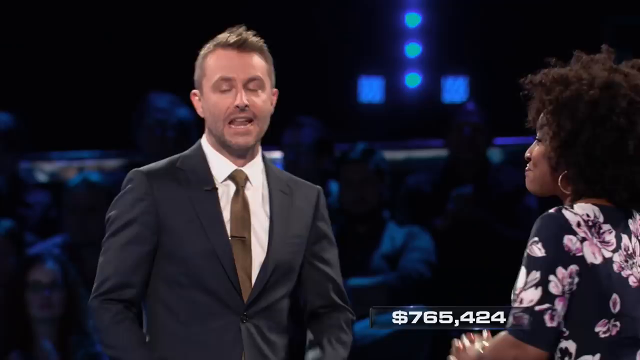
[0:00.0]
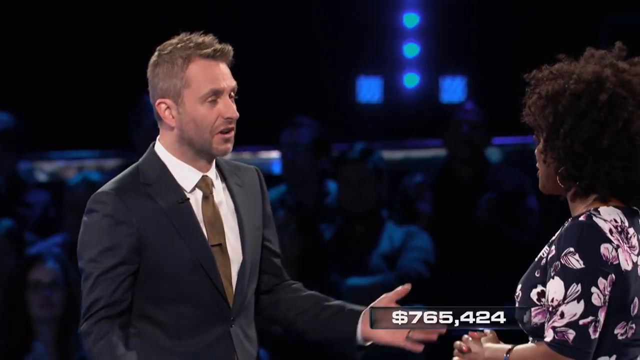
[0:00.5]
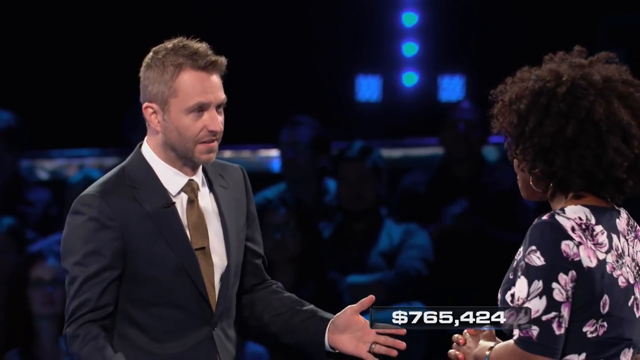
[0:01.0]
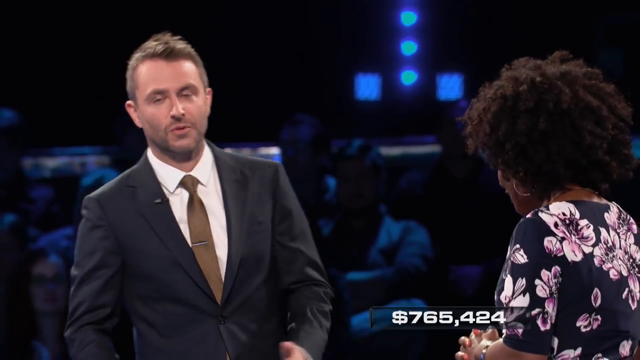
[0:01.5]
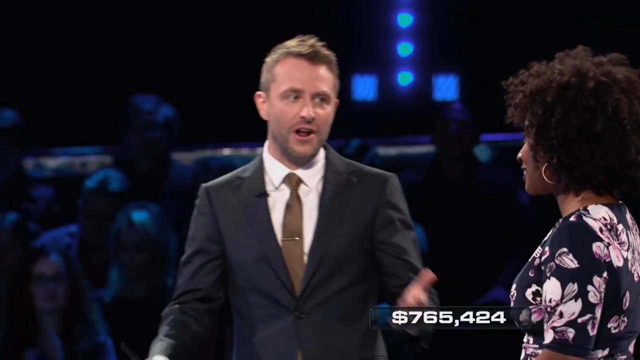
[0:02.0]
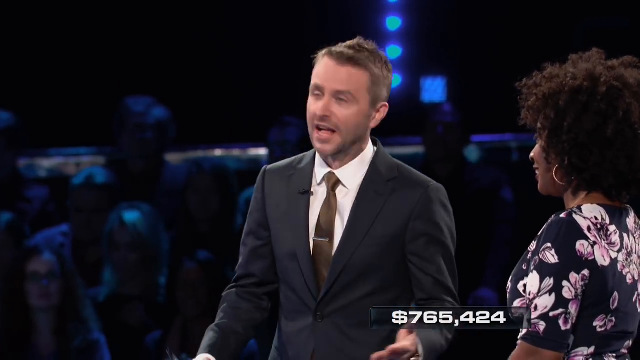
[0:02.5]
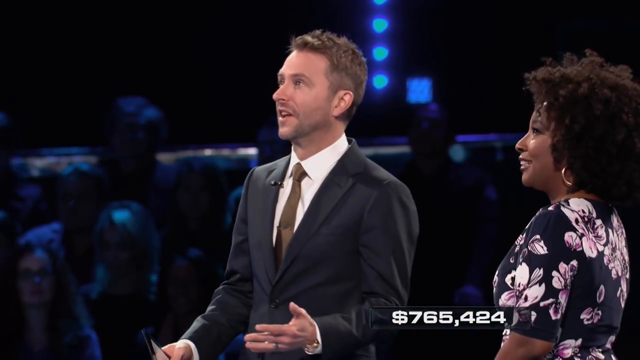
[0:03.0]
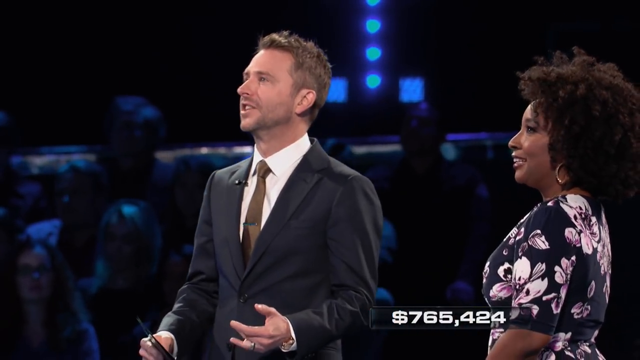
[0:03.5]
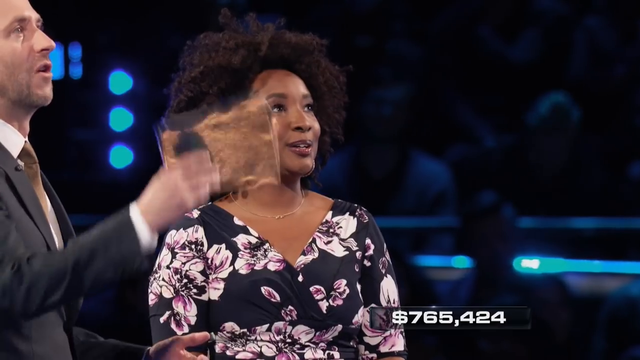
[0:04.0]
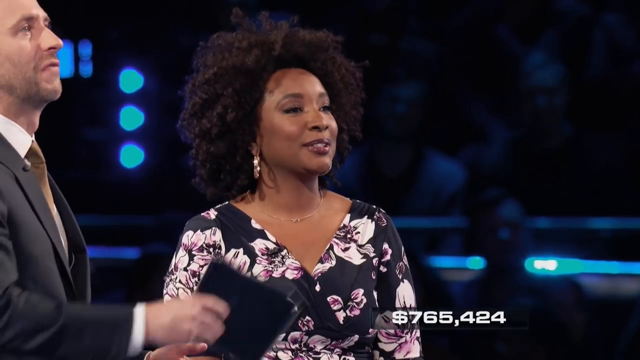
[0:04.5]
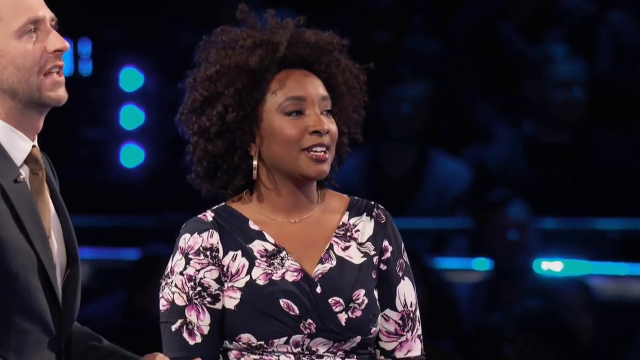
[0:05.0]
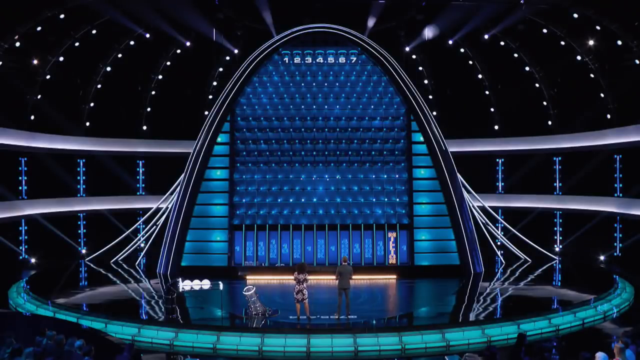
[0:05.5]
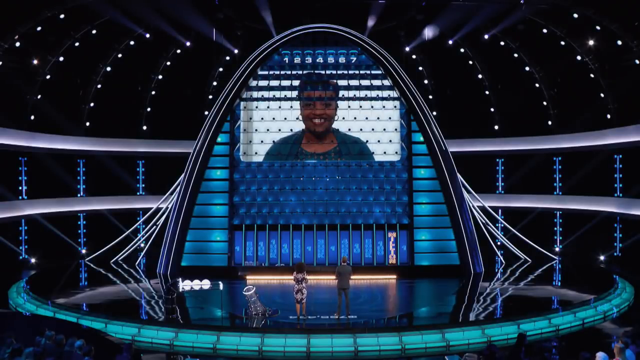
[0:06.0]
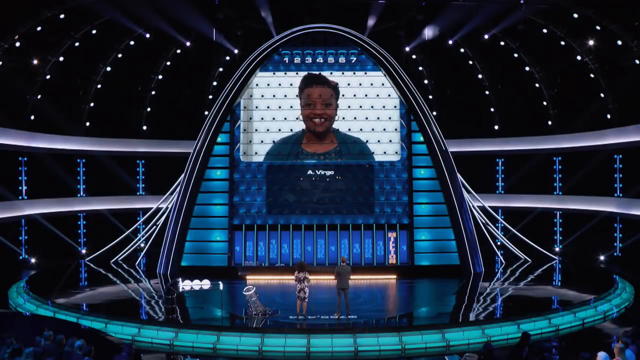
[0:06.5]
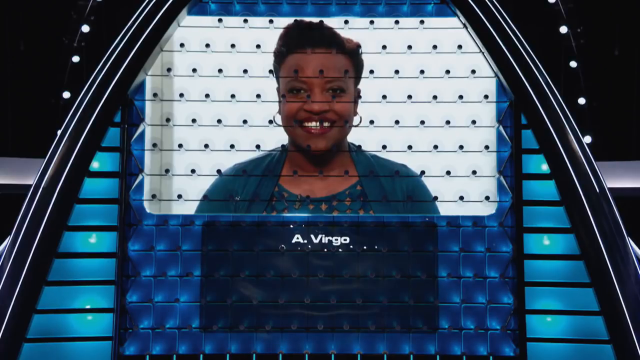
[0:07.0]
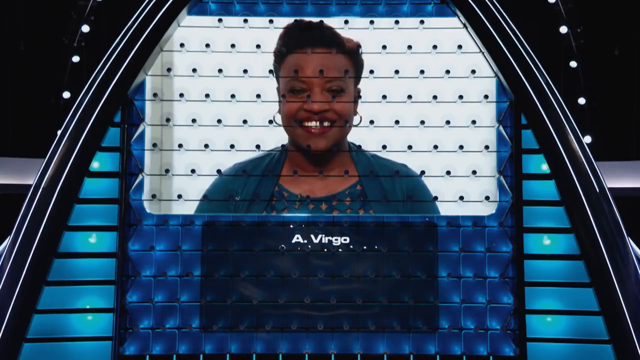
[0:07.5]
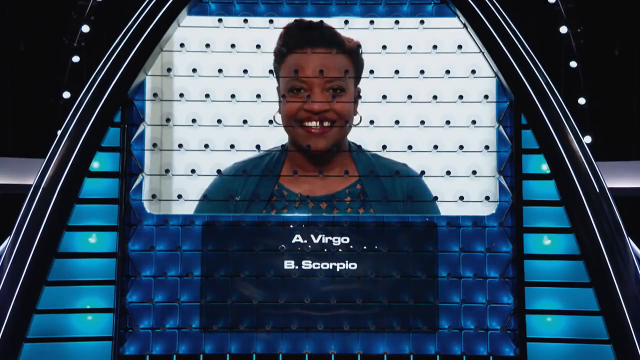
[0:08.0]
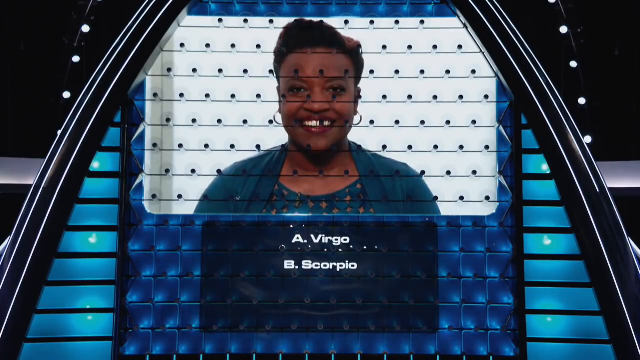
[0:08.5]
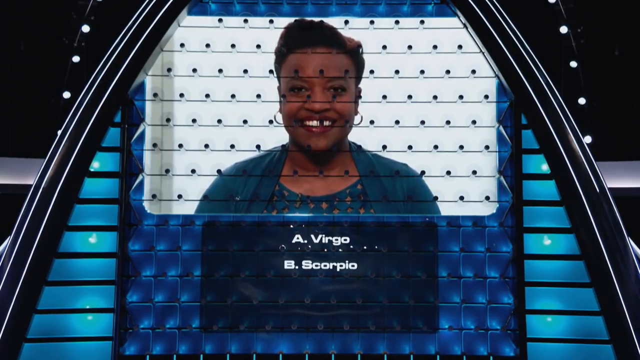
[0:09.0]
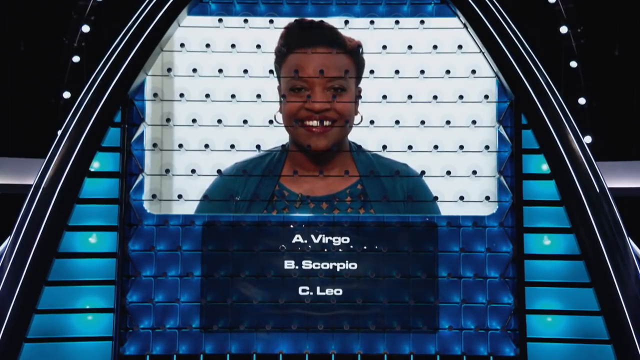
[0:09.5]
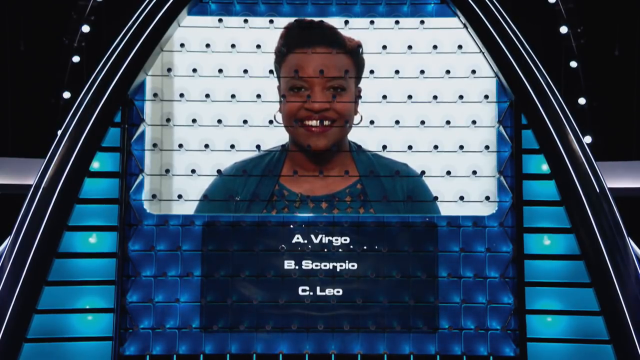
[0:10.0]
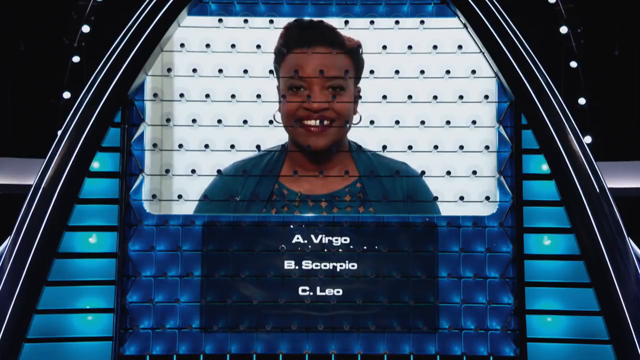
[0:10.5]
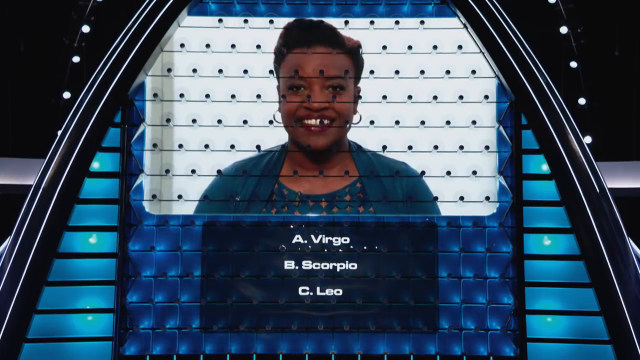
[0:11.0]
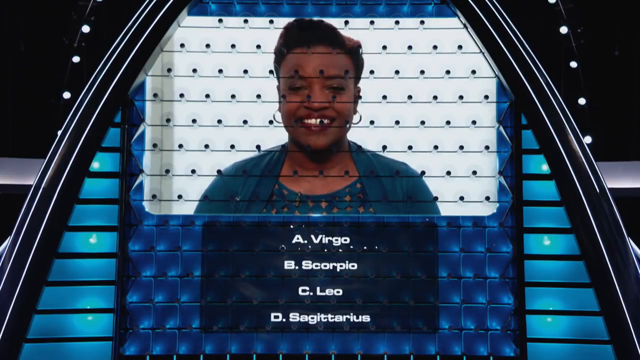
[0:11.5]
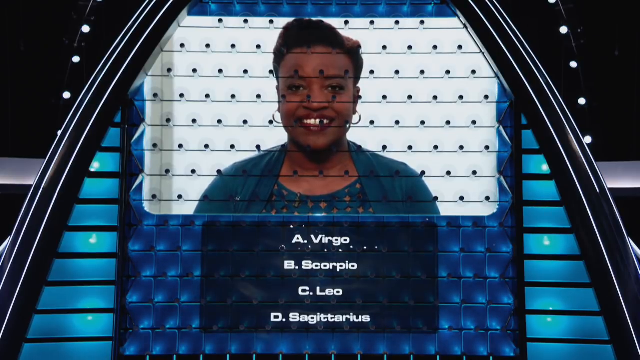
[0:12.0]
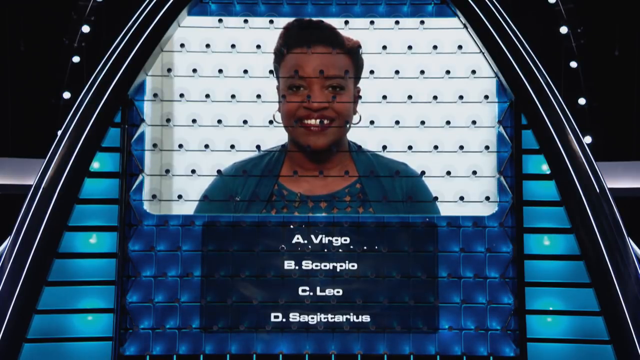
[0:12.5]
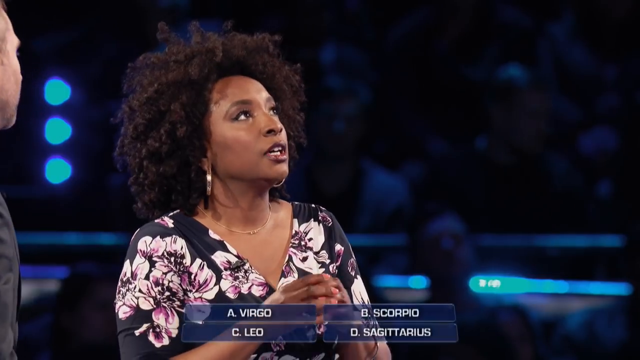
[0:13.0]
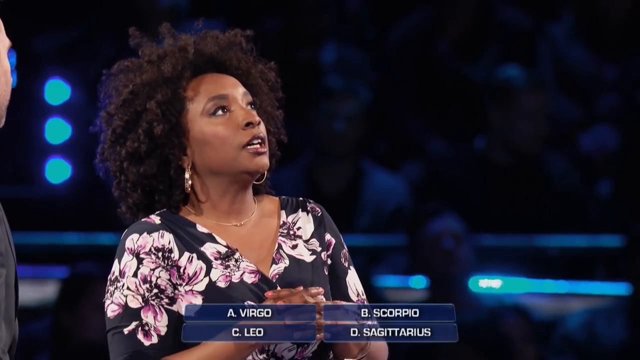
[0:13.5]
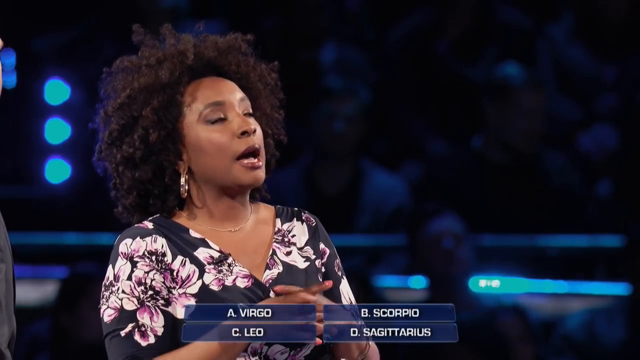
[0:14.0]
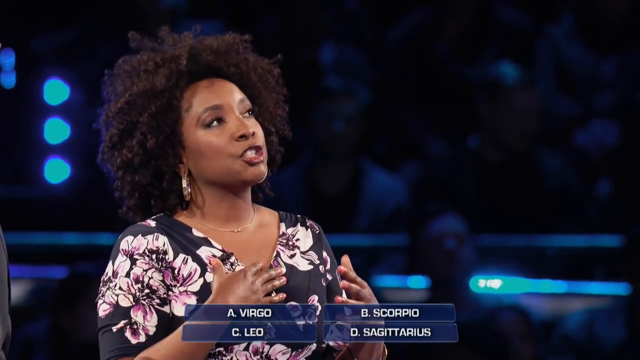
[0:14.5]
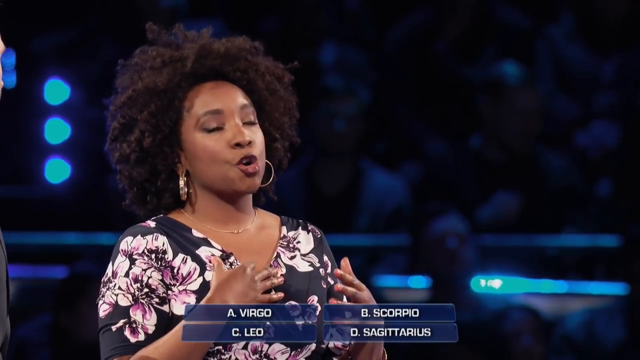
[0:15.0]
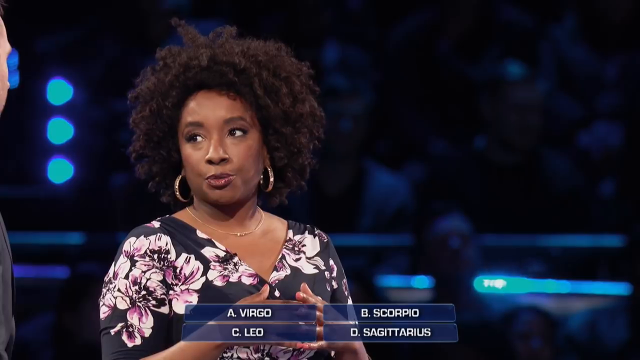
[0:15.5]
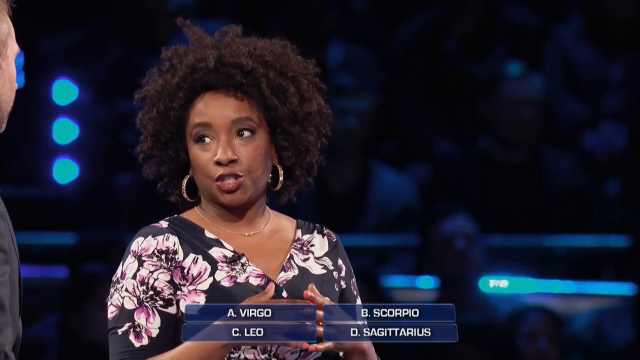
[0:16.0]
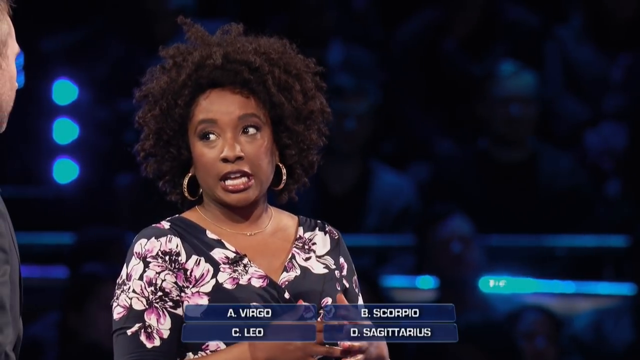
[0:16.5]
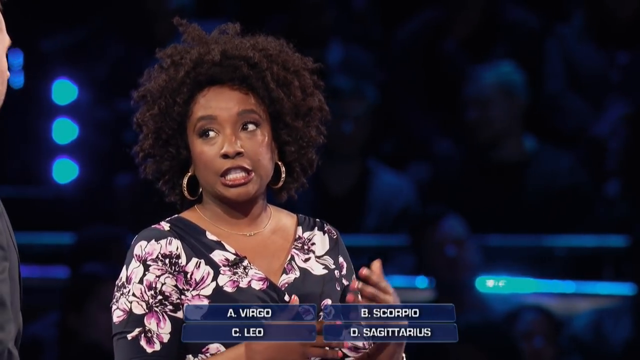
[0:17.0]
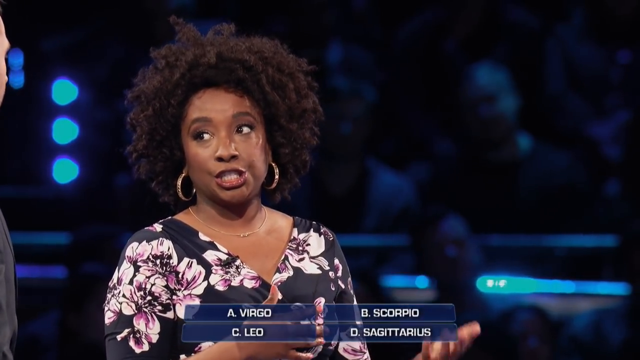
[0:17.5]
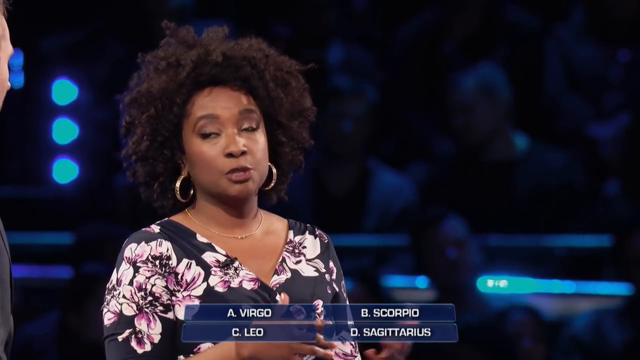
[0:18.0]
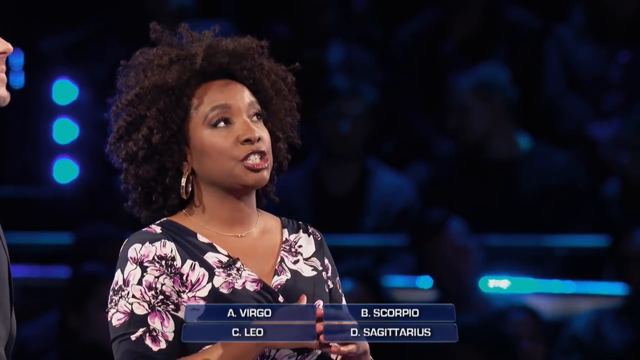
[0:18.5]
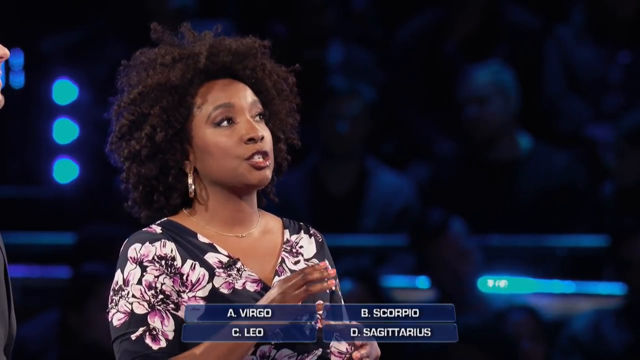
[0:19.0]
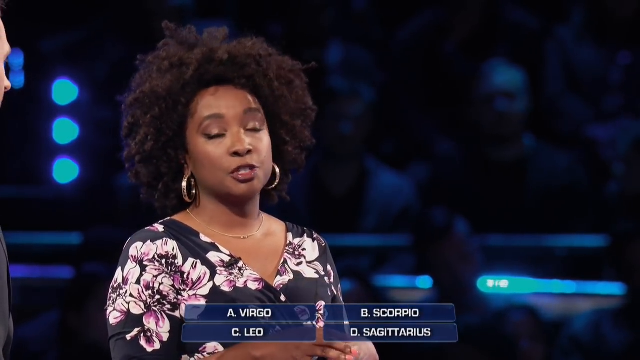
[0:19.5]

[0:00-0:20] A white male talk show host in a suit talks to a Black woman, and an audience appears to be in the background. The host keeps talking and looks up as the woman next to him looks up; they both appear to be looking at the same thing. The host appears to have a book in his right hand; he waves it for a second and then puts his hand down. Both of them look up at a giant screen in front of them. The screen is blue and has the numbers one to seven across the top. On the screen is a Black woman with short hair, and underneath her picture are multiple choices: "A. Virgo, B. Scorpio, C. Leo, and D. Sagittarius." The woman looks up at the screen as if she is trying to make a decision, talking, putting her hands together and looking at the host at the same time.